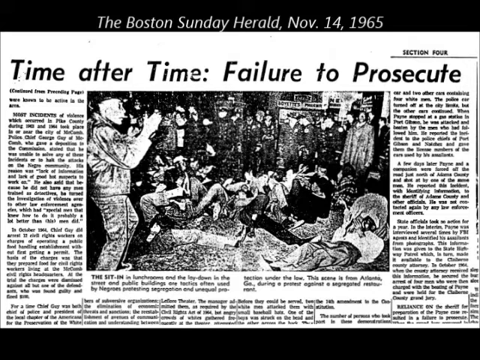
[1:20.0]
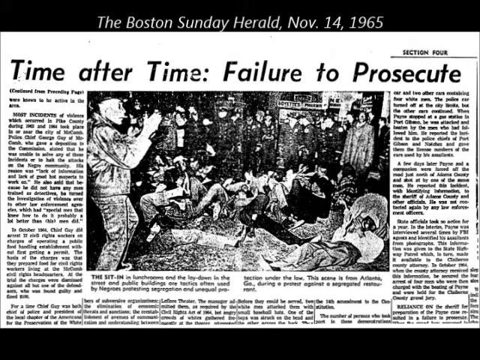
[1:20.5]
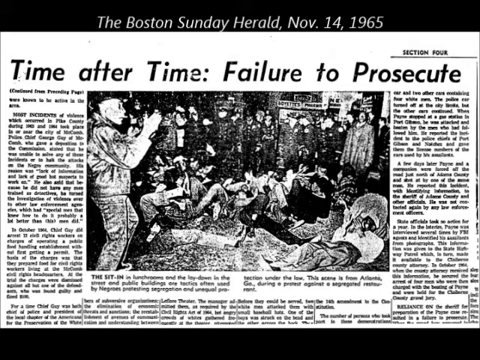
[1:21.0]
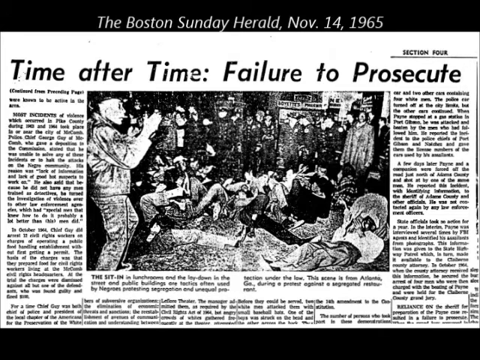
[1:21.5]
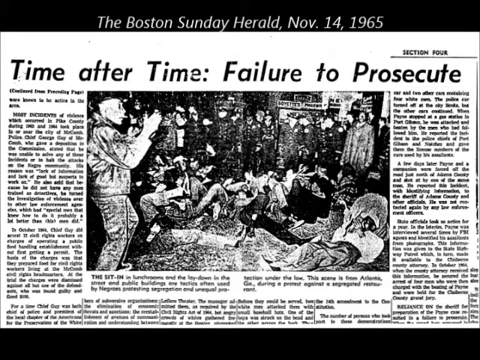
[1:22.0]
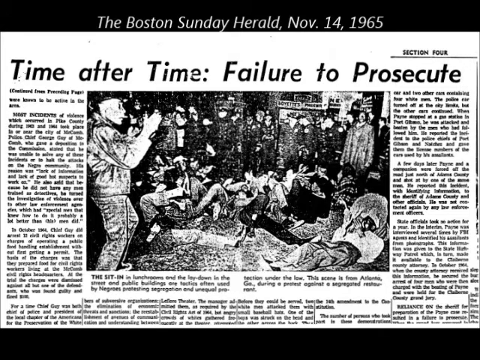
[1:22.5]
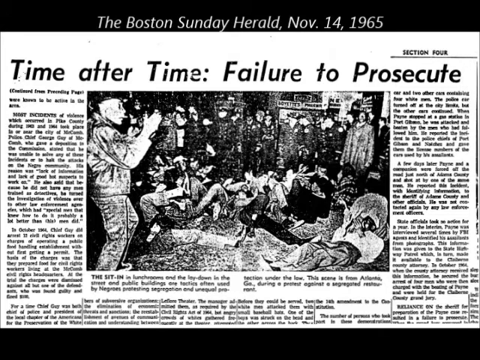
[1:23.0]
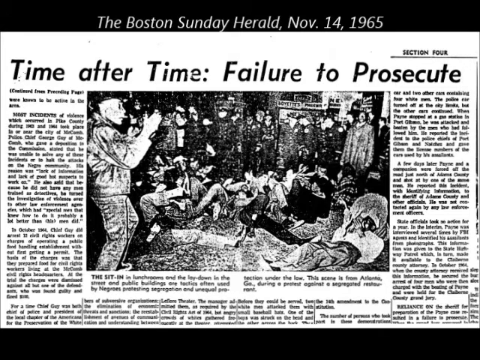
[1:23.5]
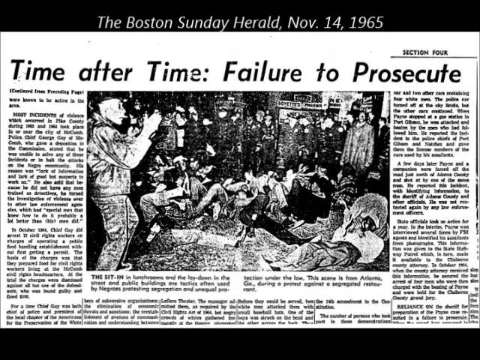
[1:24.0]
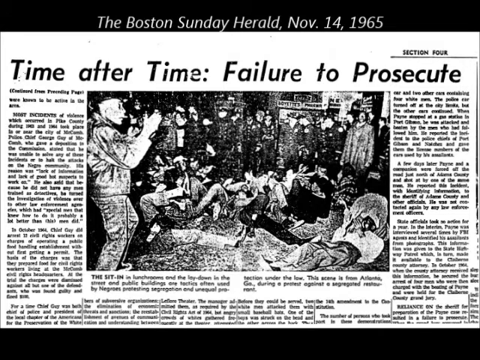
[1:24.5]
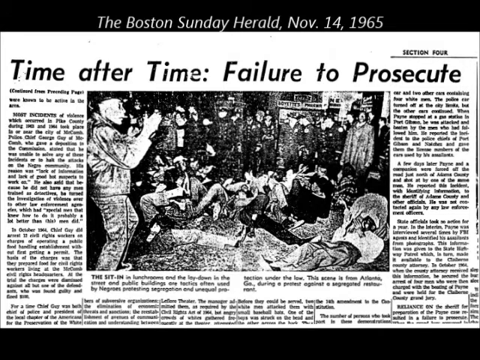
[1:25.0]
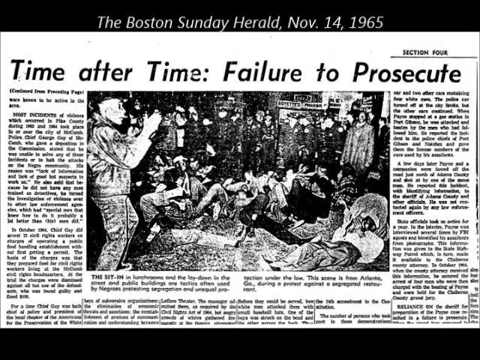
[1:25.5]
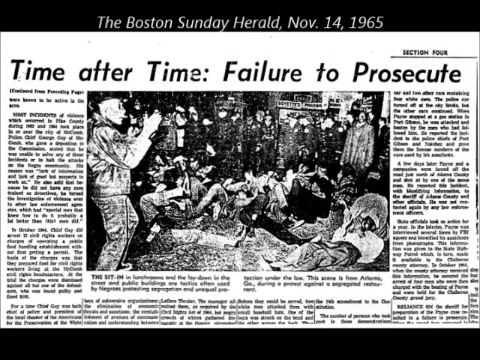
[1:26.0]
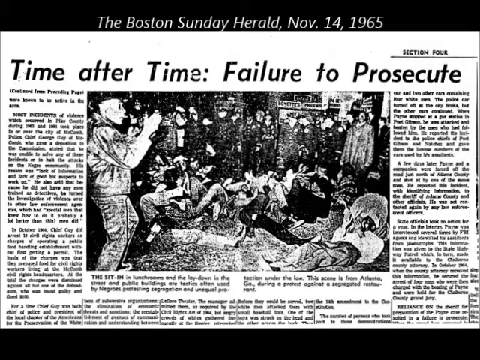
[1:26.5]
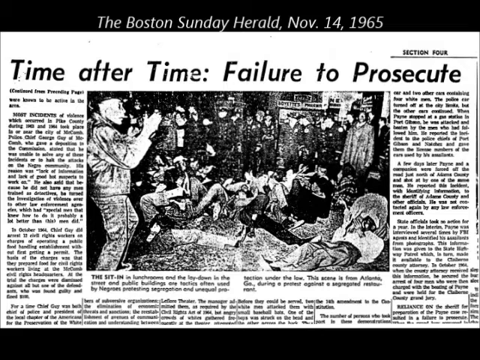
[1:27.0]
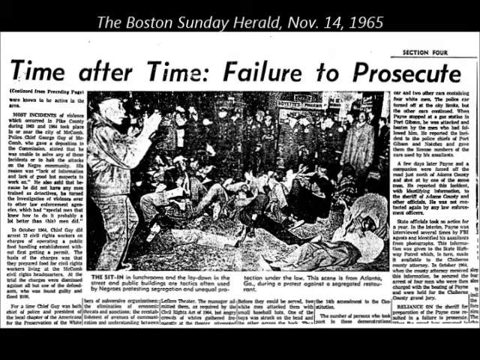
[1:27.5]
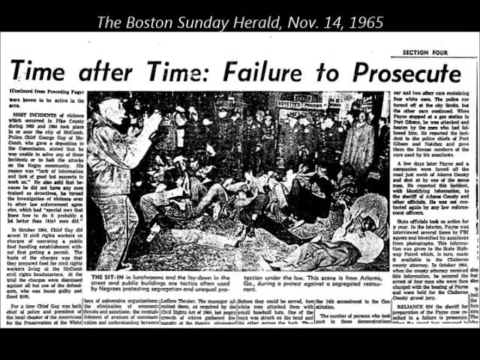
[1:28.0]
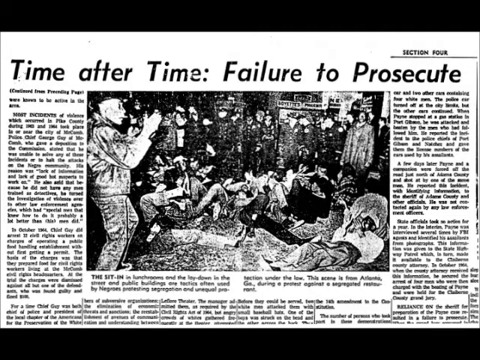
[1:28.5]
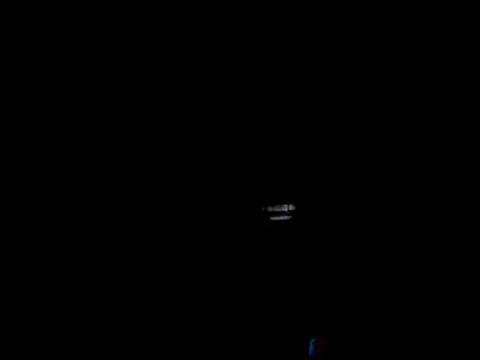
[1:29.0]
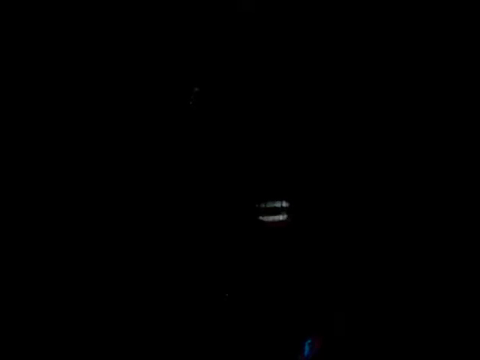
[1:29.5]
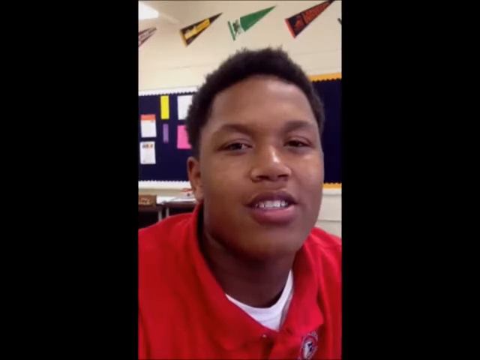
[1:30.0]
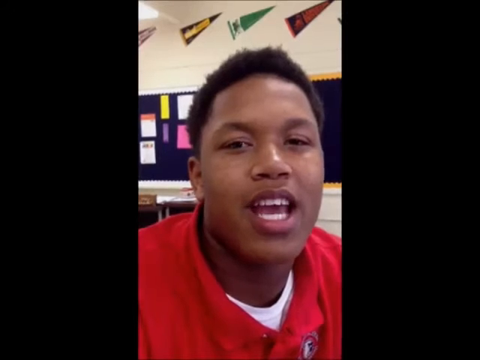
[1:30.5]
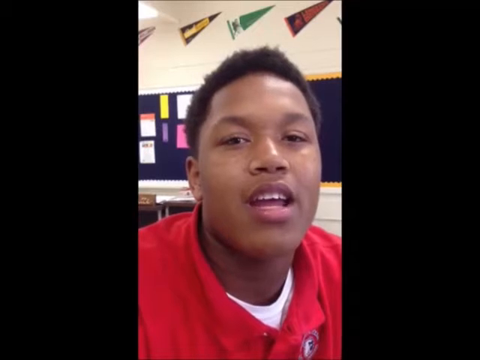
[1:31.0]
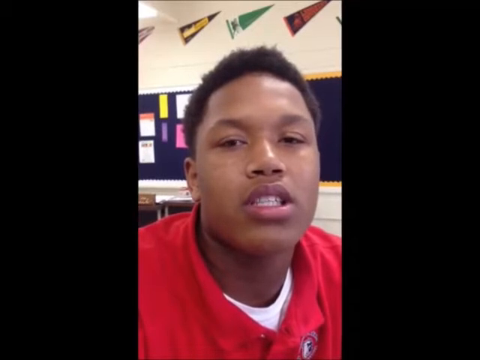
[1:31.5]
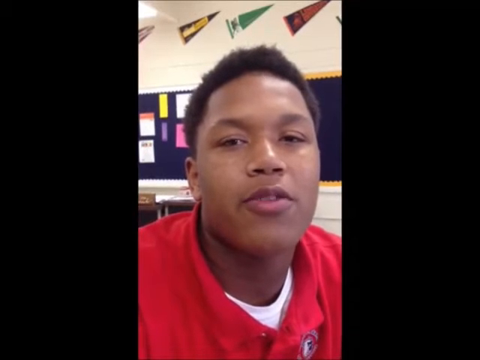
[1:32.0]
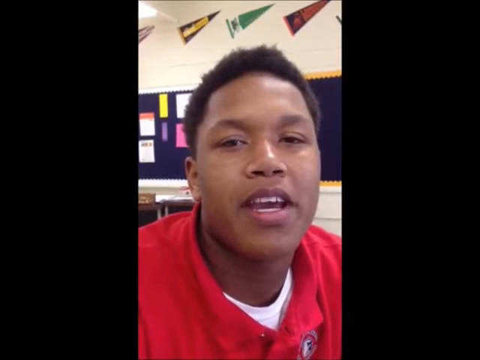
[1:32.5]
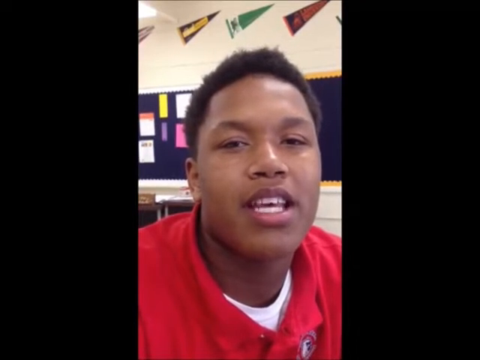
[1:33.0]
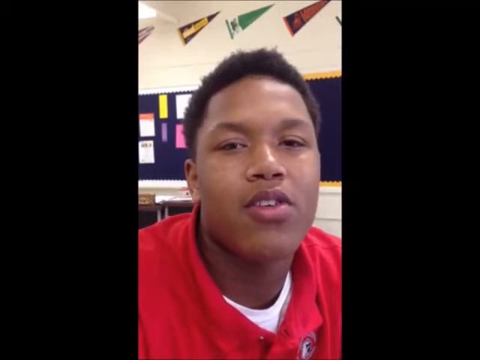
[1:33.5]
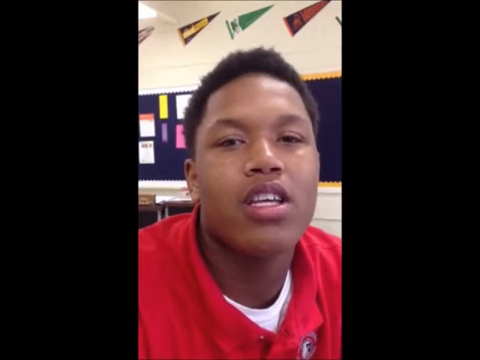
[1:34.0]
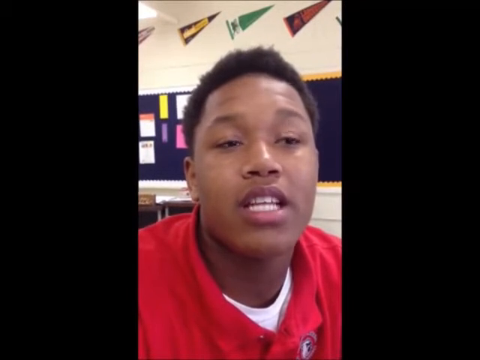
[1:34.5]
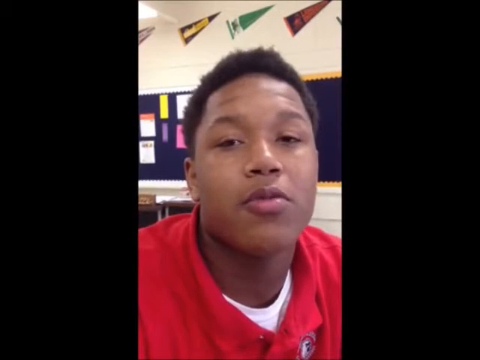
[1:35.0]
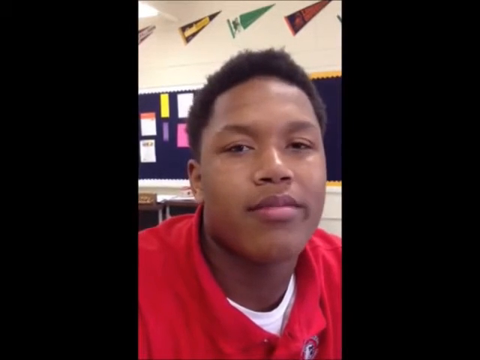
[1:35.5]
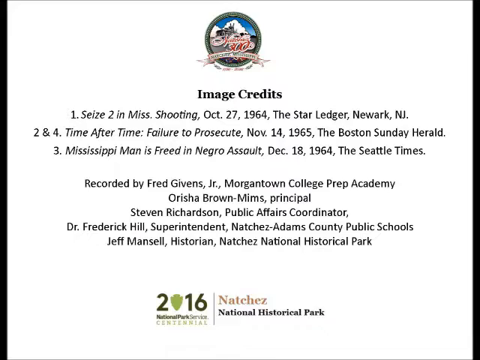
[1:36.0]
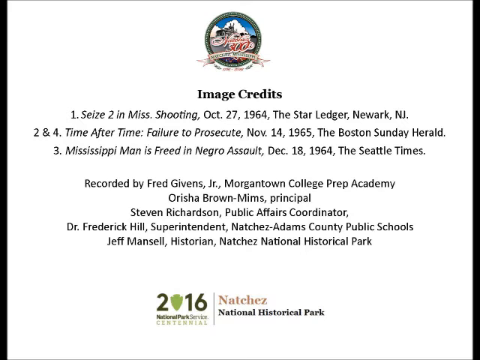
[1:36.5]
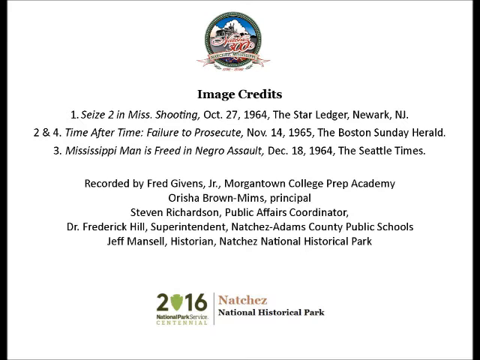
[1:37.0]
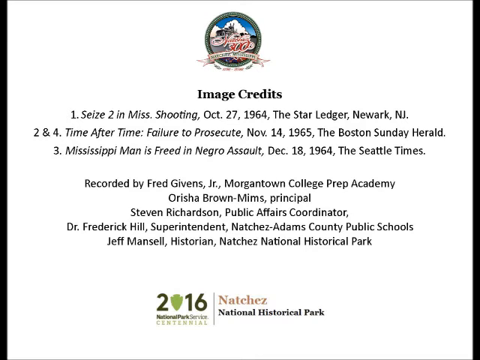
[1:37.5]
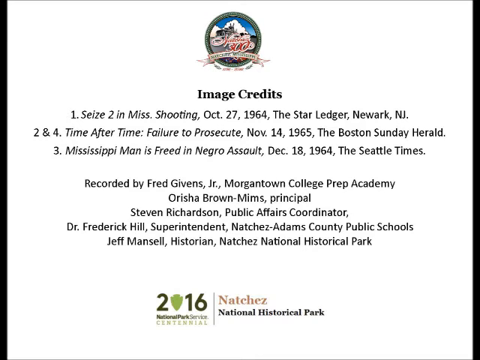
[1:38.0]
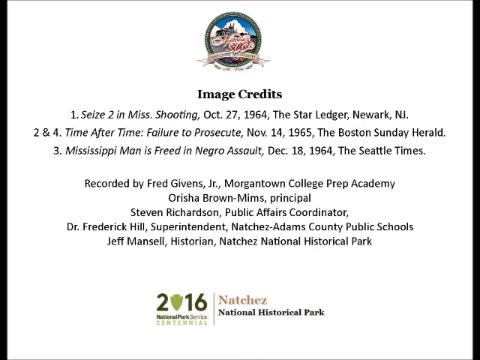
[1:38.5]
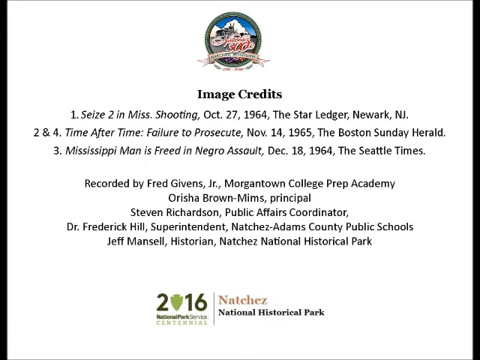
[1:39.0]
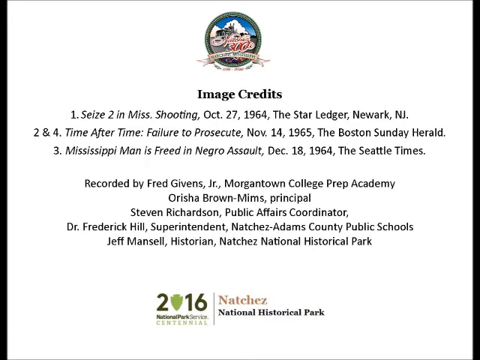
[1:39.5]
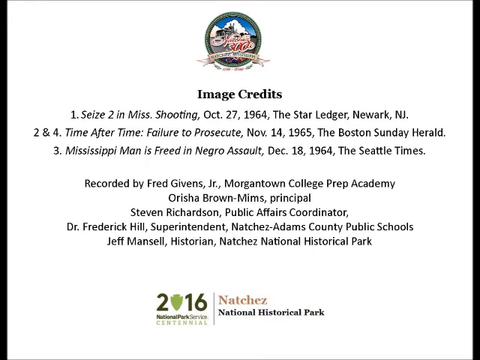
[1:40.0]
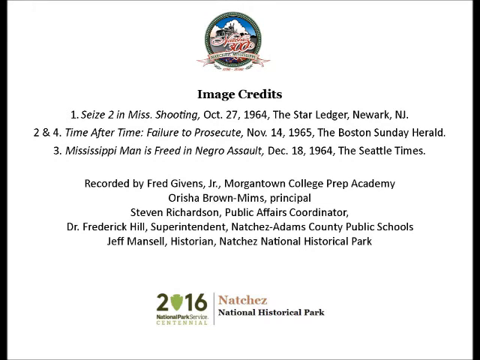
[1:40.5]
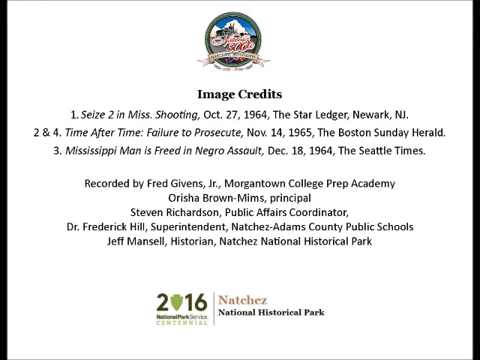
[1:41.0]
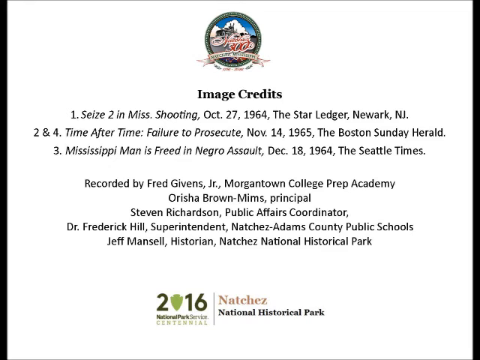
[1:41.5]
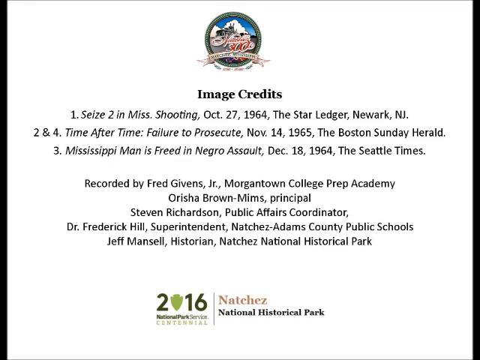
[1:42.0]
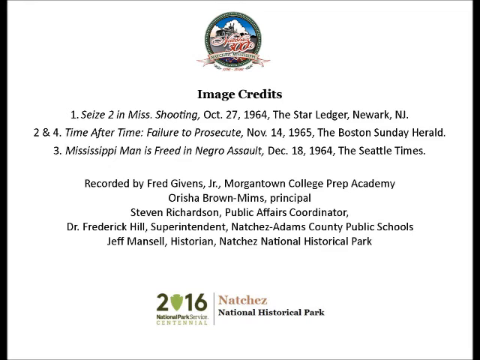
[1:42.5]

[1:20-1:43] The newspaper article from the Boston Herald, November 14, 1965, "Time after time, failure to prosecute," is on screen, with the photograph of the sit-in: African American men on the ground staging a demonstration, surrounded by uniformed police officers. Someone appears to be taking a photograph of the men on the left side of the picture, which is grainy and a little hard to make out. The video then flashes to a young modern-day African-American man who is talking; he appears to be in a classroom. Behind him is an ivory-colored wall with some flags or pennants that look to be from colleges or universities, and a bulletin board with a dark navy blue background and yellow and white trim or border, with colorful pictures or papers hung on it. The young man has short black hair and smooth dark skin, and wears a red polo shirt with a white t-shirt underneath. He talks into the camera, his eyebrows raising as he speaks. A screen then flashes up that says "Image Credits," giving the details of the articles shown in the video and attributing them to their newspapers. It also says "recorded by Fred Givens, Jr., Morgantown College Prep Academy. Orisha Brown-Mims, principal, Stephen Richardson, public affairs coordinator, Dr. Frederick Hill, Superintendent, Natchez-Adams County Public Schools, Jeff Mansell, historian, Natchez National Historical Park." At the bottom is the Natchez National Historical Park 2016 icon.